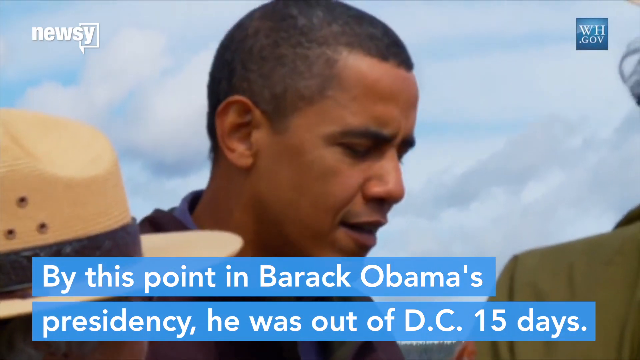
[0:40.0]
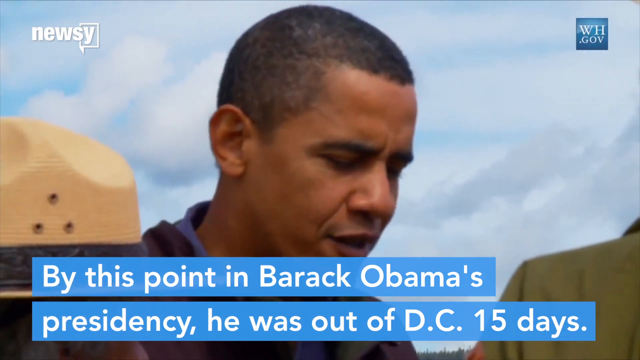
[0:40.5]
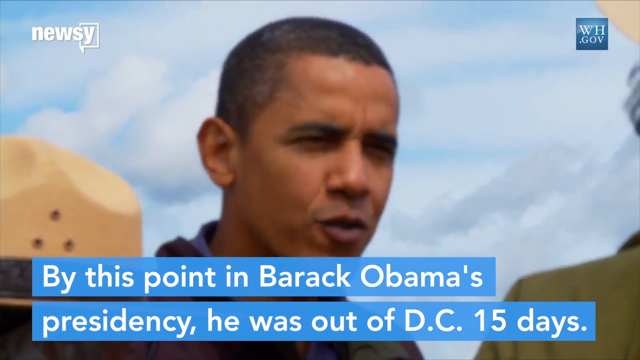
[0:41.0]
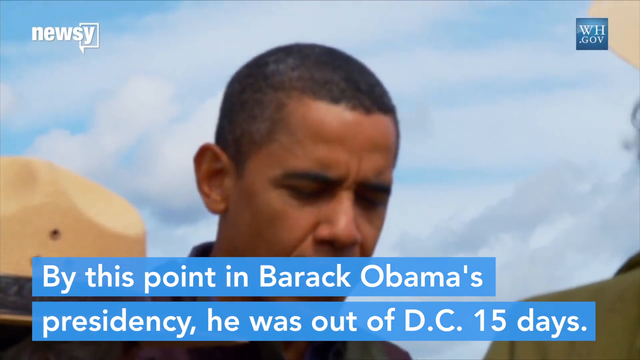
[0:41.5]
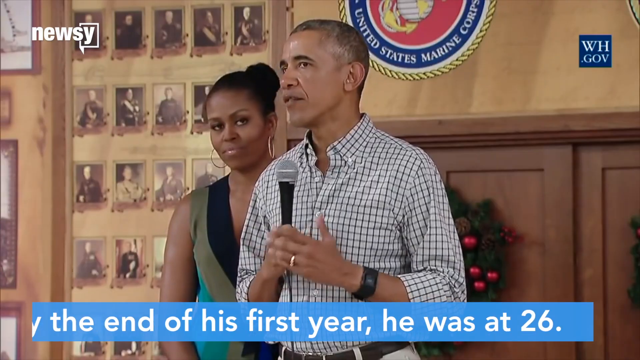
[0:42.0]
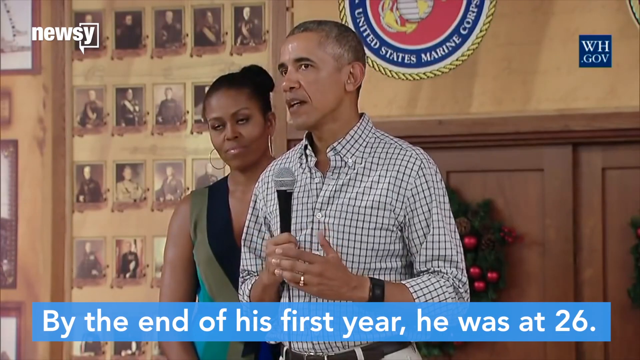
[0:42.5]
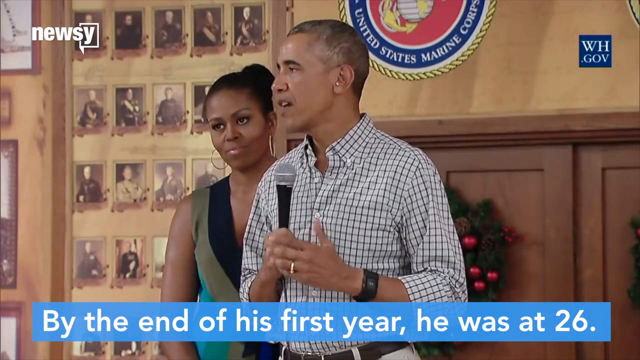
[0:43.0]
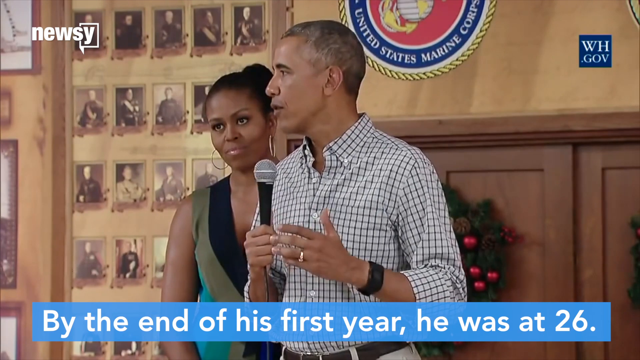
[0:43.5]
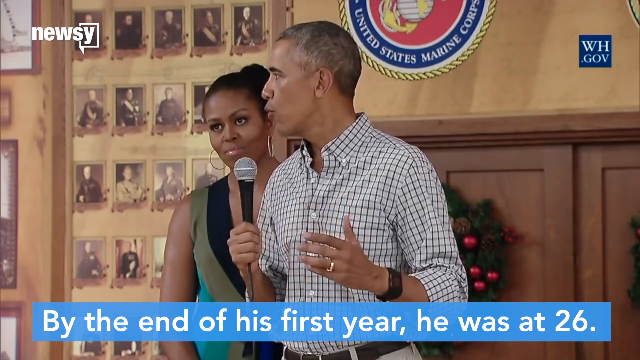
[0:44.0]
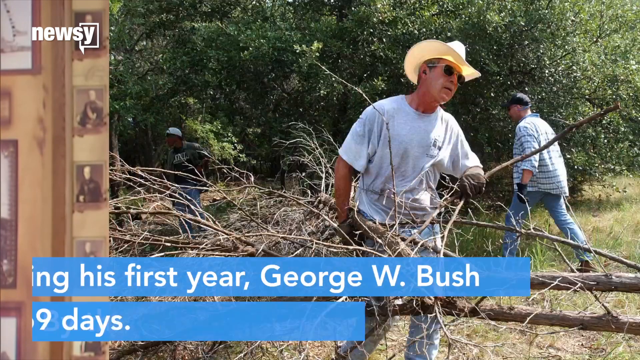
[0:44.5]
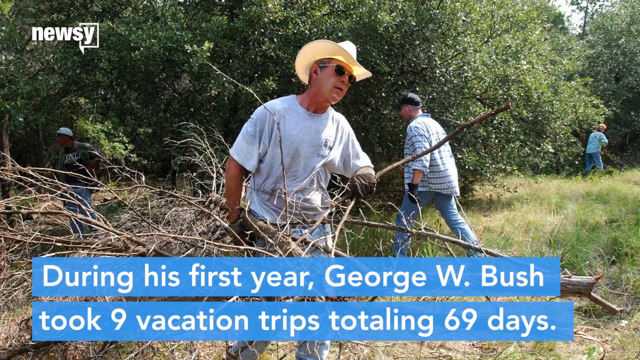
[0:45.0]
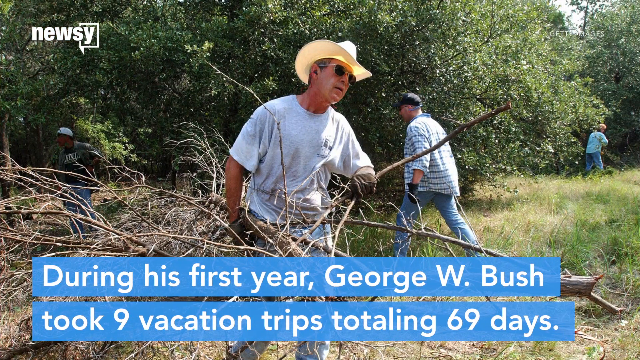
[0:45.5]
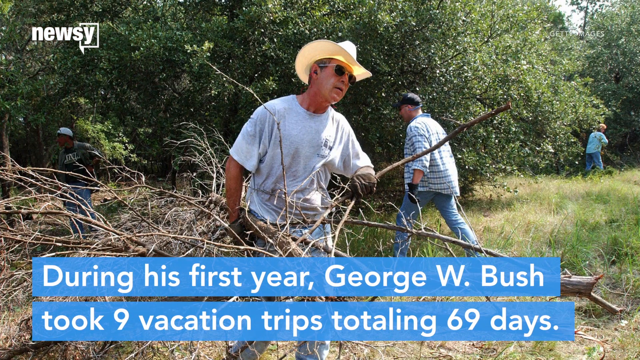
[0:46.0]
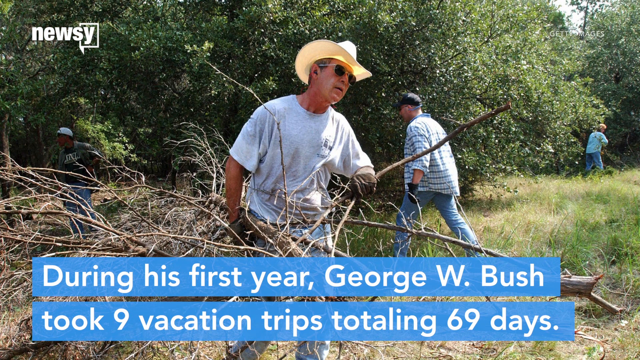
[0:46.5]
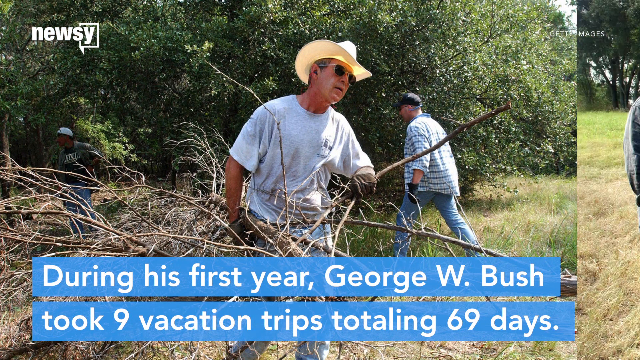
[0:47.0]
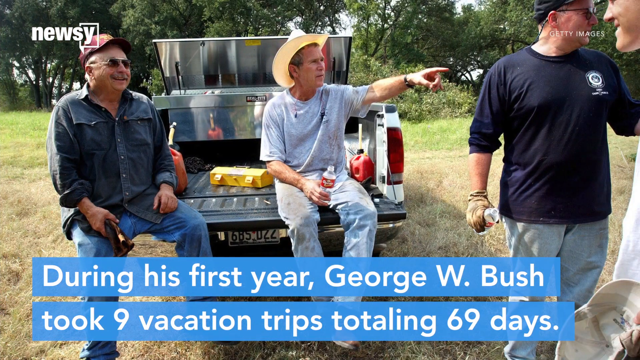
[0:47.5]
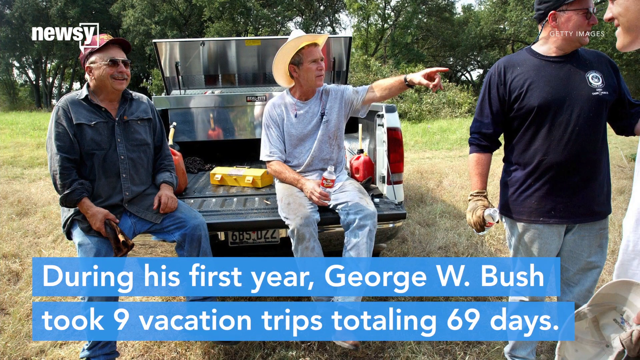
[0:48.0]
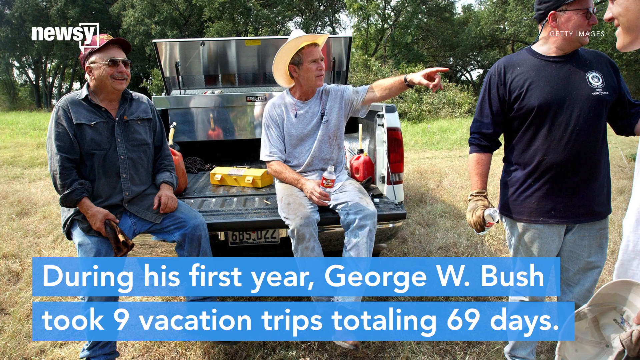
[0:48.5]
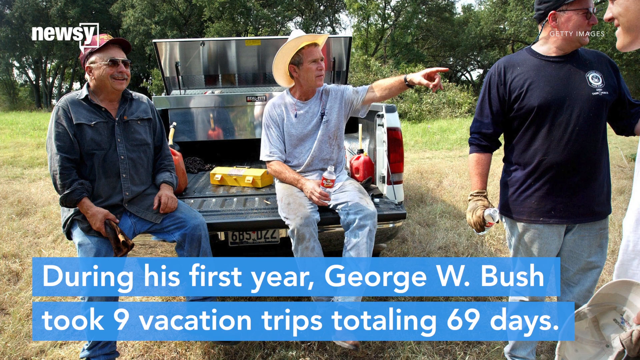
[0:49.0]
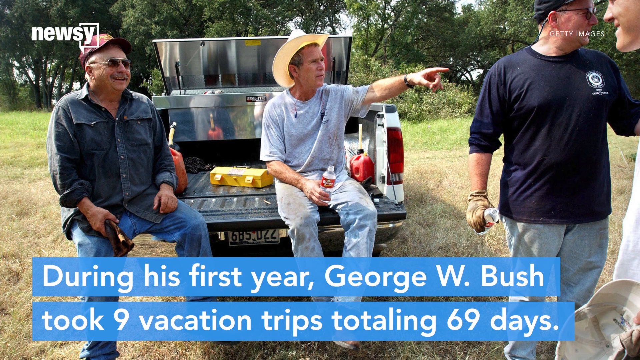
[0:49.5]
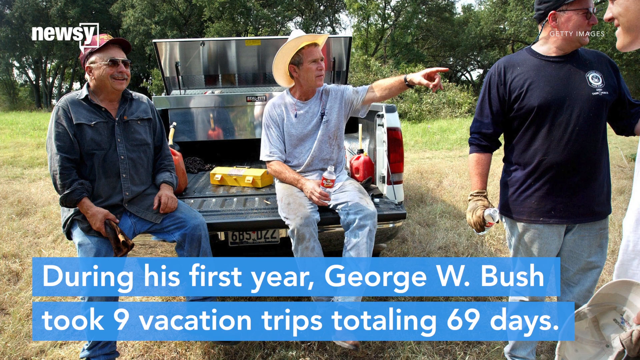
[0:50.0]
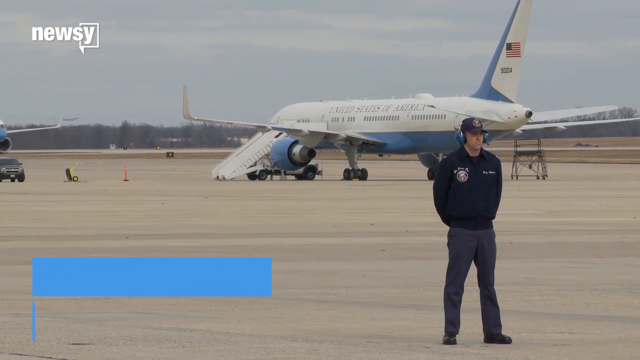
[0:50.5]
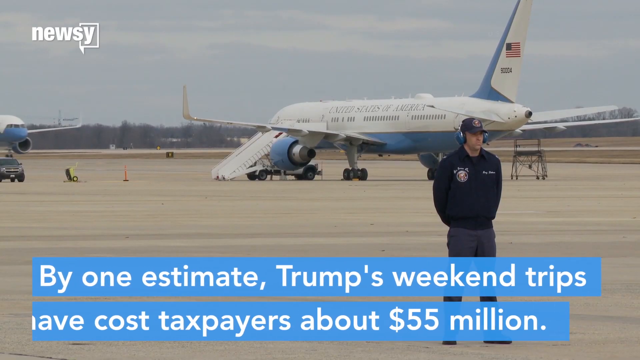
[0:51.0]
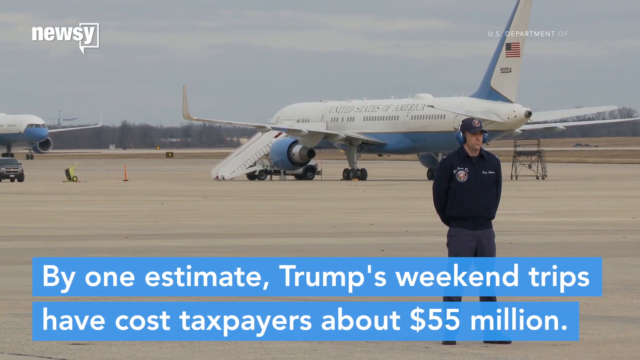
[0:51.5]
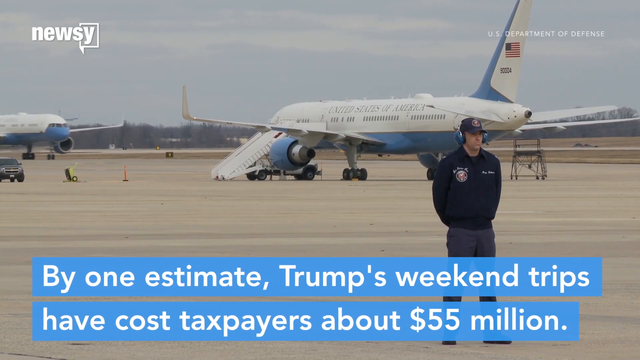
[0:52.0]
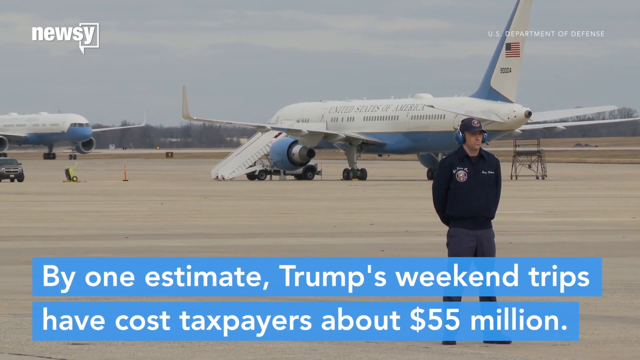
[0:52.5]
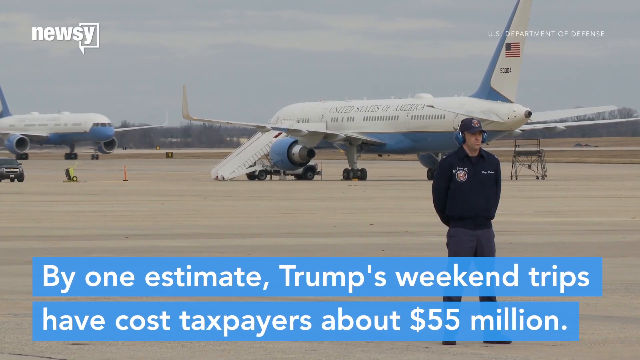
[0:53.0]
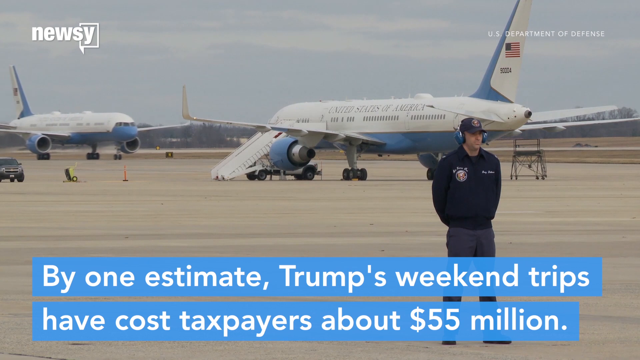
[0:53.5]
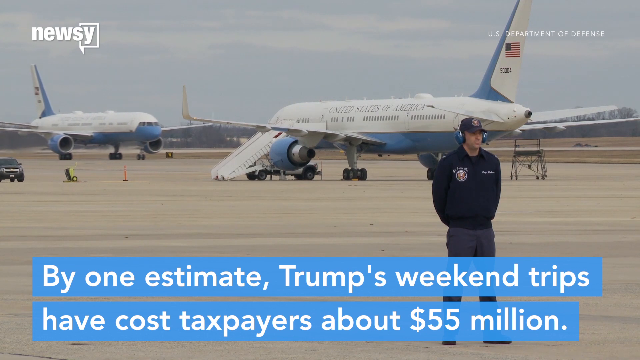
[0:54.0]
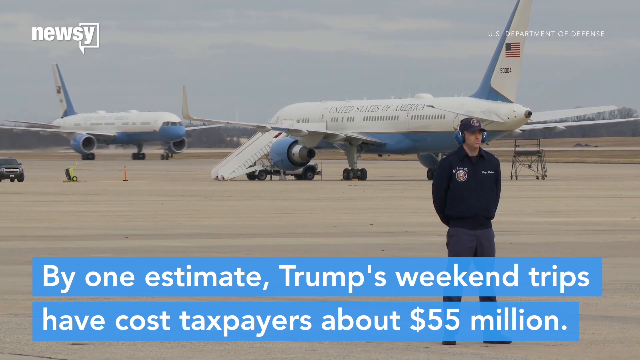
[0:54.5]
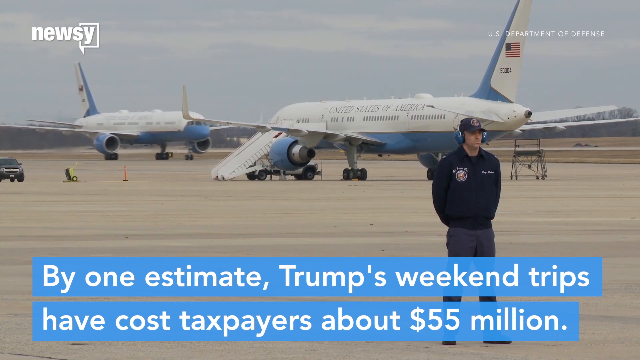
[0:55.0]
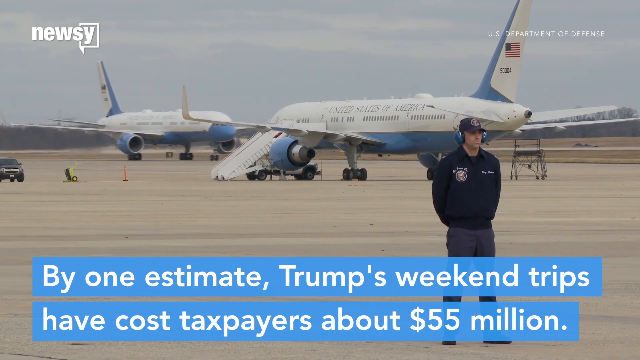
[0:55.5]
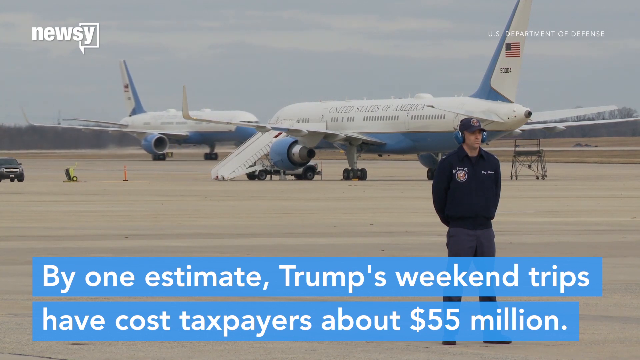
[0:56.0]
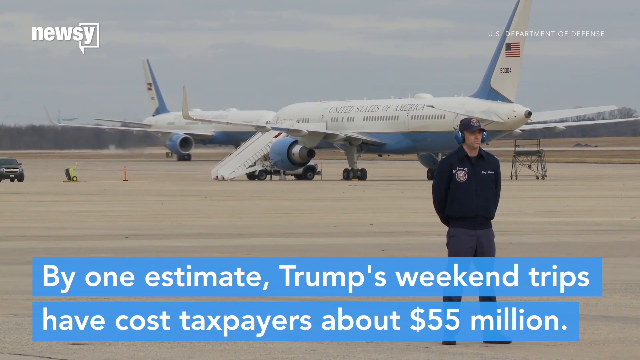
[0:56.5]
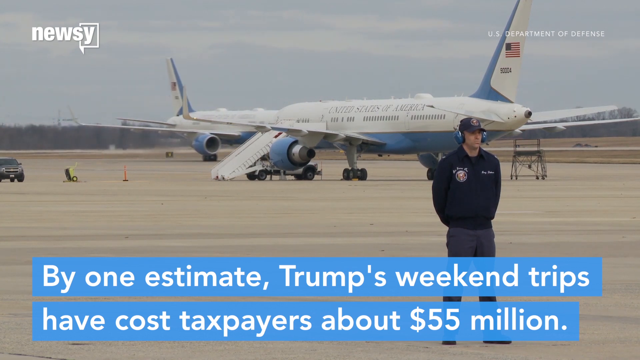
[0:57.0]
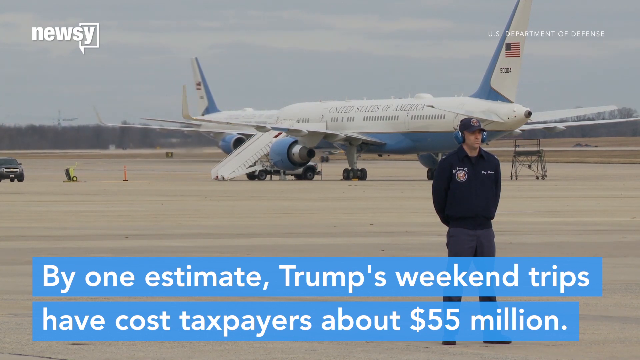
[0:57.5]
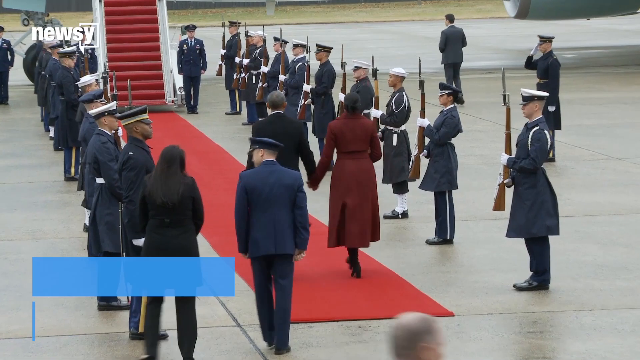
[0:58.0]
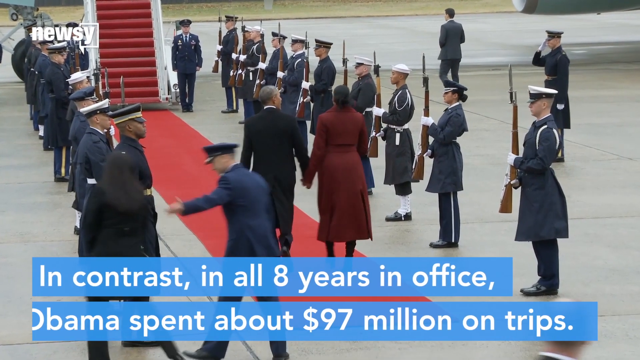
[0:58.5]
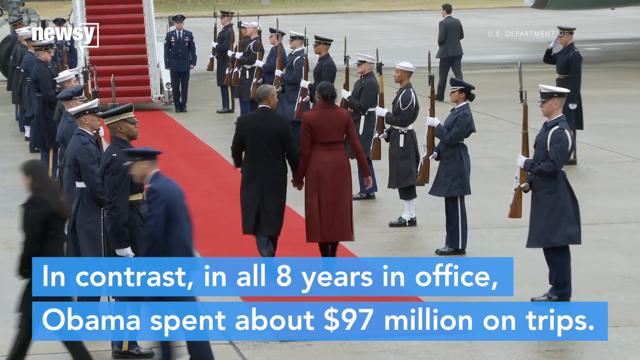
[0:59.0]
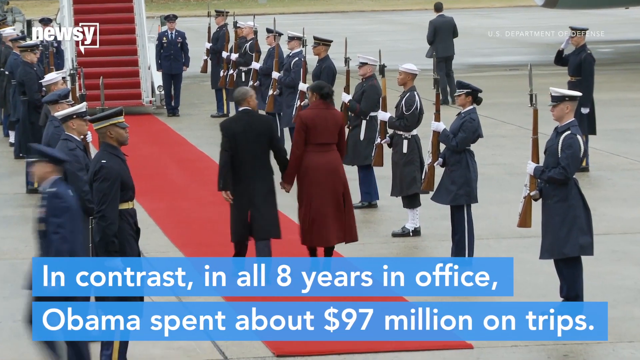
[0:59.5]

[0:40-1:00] Barack Obama alights from a car in a landscape that looks forested or bushy, with shrubs in the background. As he arrives, he seems to greet a group of people wearing Godfather hats and seems excited to meet them as they talk. The video focuses on him as he talks. In a different setting, Obama addresses a group of people while holding a microphone; he wears a shirt with small boxes, and his wife, Michelle Obama, is beside him. Another scene shows people working in a booth, trying to carry twigs out of it, followed by people sitting on a pickup and pointing. Then an airport appears: a guard stands facing the camera, an airplane is landing, and another has already landed. Obama is shown again with captions reading "during his first year, George W. Bush took nine vacation trips, totaling 69 days," then "by one estimate, Trump's UK trip have cost taxpayers about $51 million," and finally "in contrast, all eight years in office, Obama spent about $97 million on trips," comparing the spending of the two presidents.